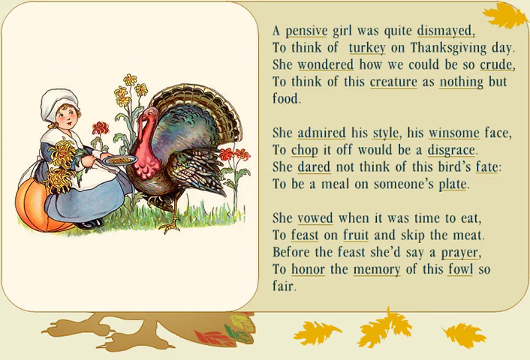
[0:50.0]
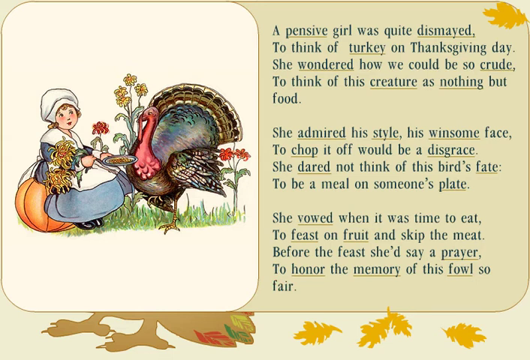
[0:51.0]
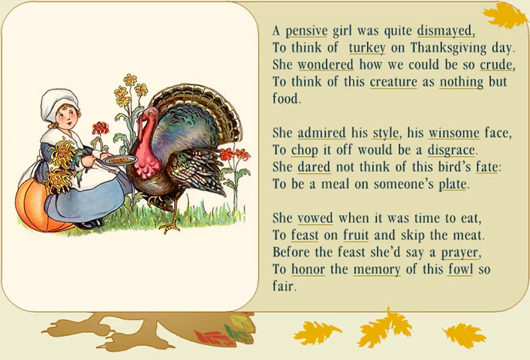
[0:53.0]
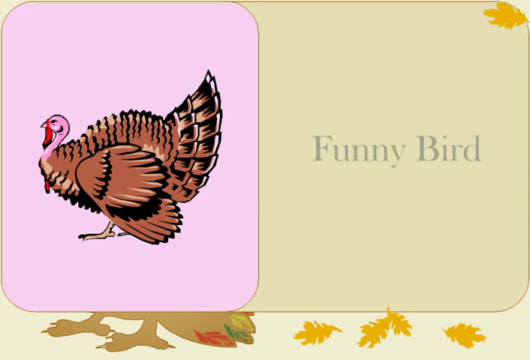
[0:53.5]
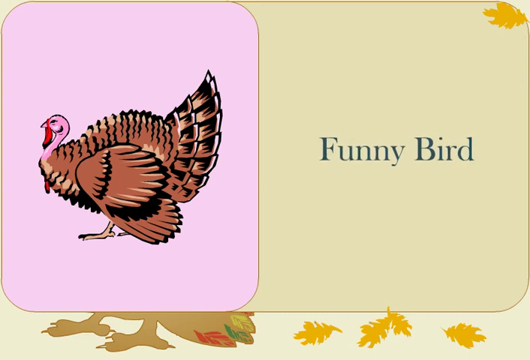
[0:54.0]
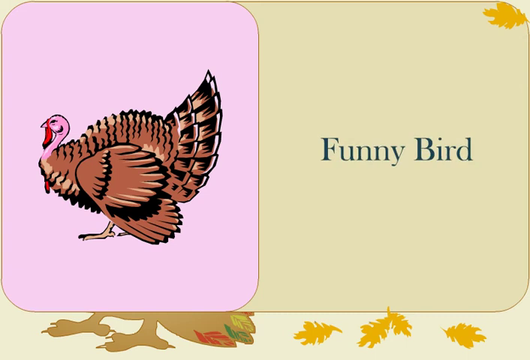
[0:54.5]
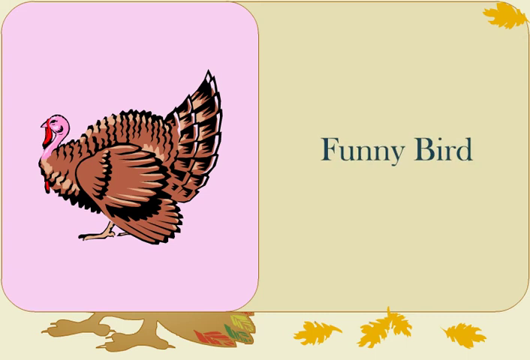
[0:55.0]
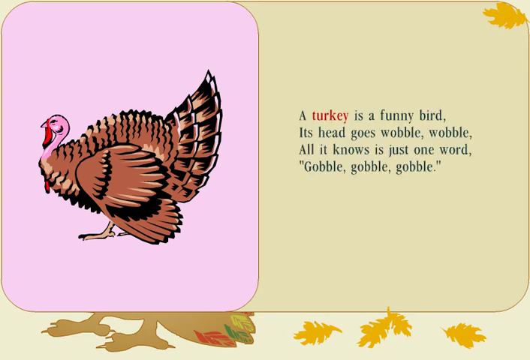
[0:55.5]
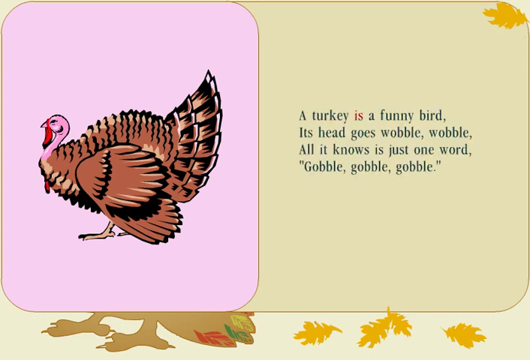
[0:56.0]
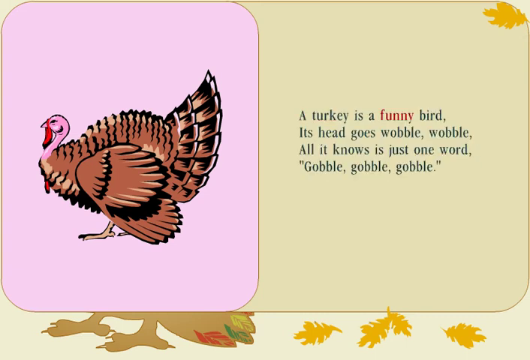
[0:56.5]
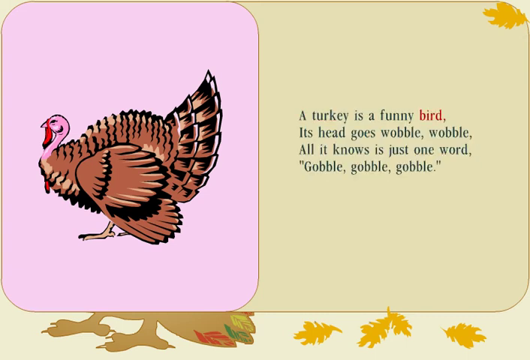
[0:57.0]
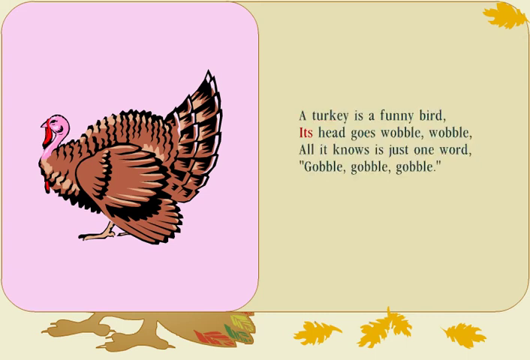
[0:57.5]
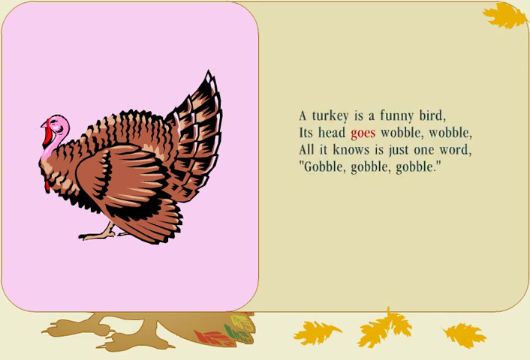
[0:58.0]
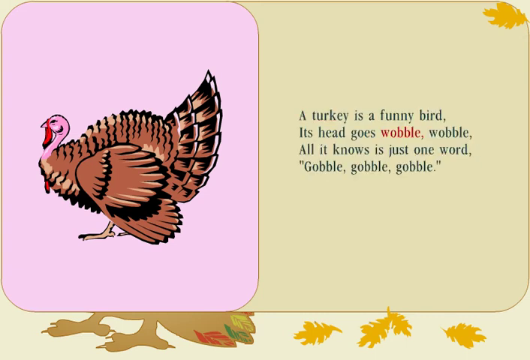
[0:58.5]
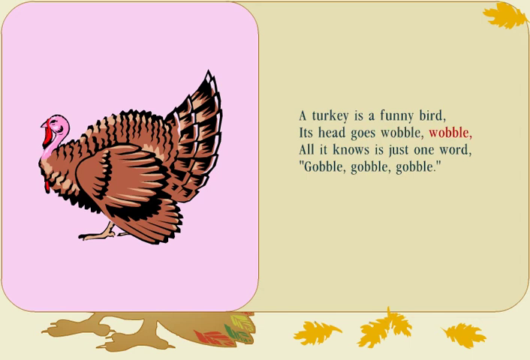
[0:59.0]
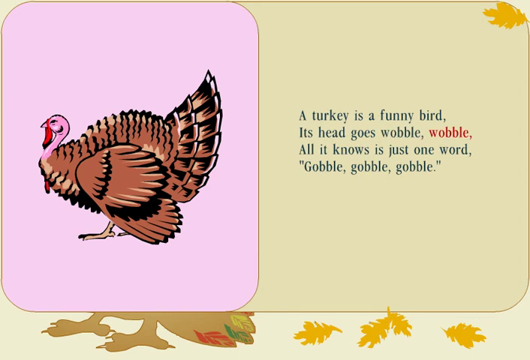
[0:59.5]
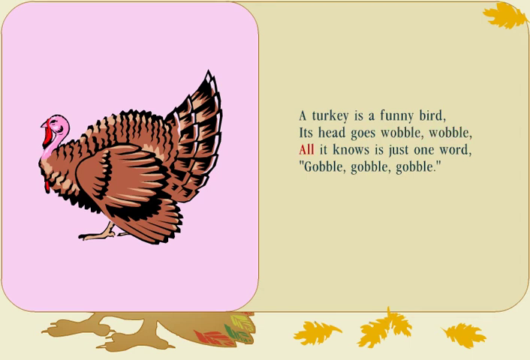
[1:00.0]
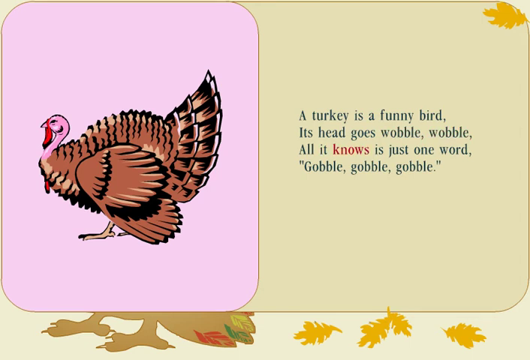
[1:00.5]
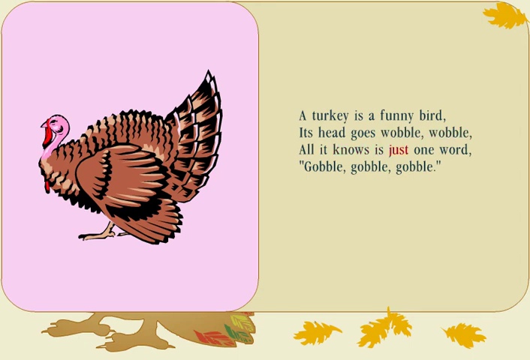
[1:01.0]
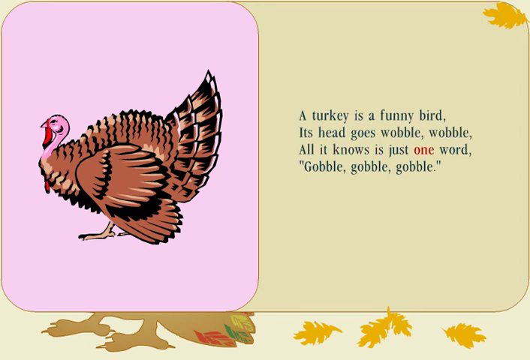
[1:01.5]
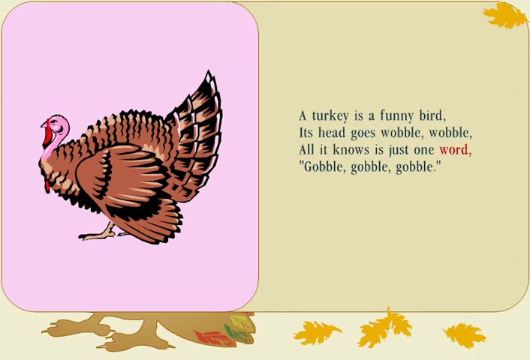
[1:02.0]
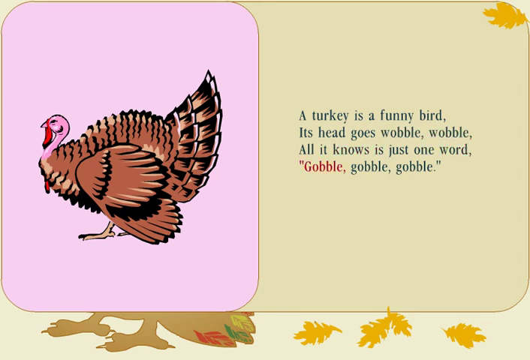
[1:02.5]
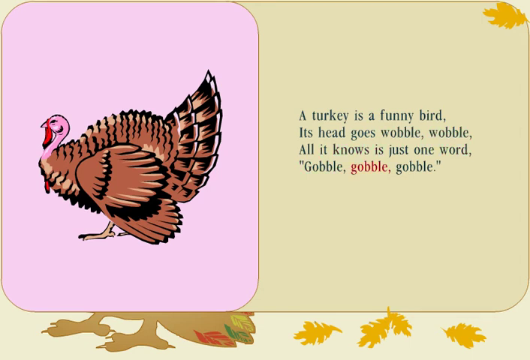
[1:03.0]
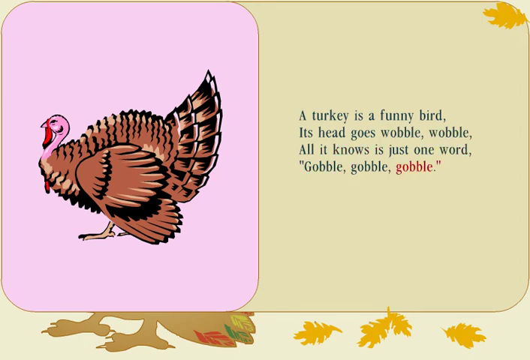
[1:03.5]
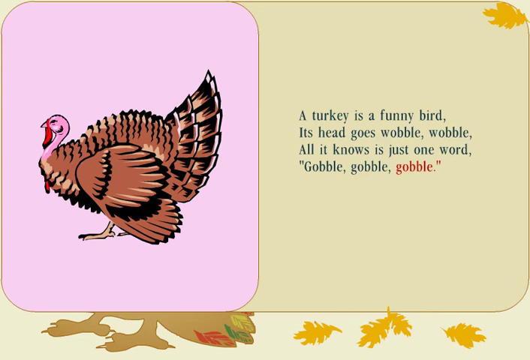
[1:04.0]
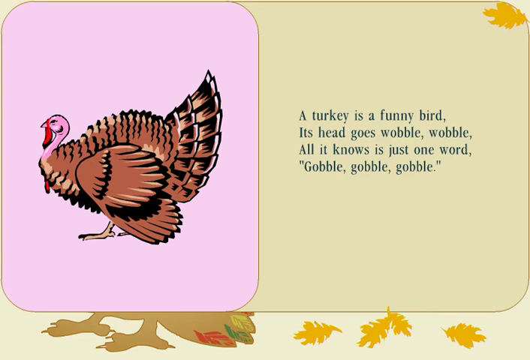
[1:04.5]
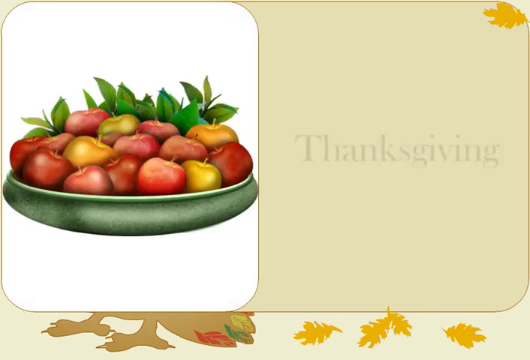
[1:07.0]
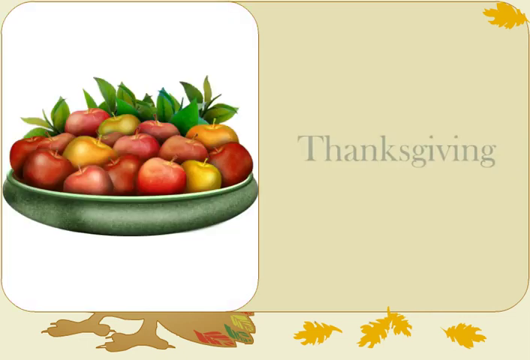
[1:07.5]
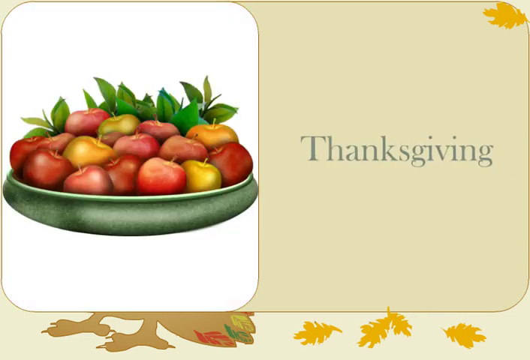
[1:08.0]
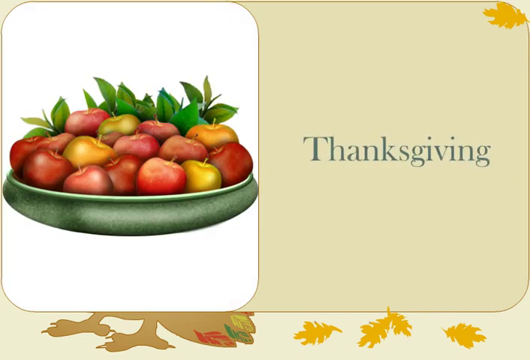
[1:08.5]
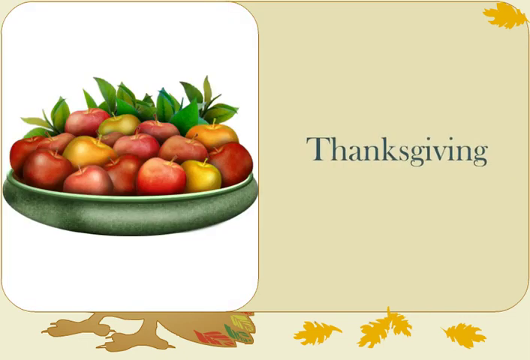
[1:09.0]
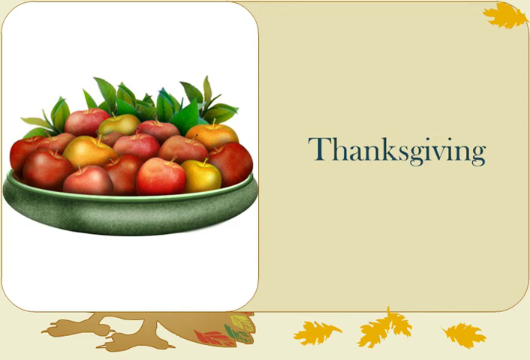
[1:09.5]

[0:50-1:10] The same poem screen continues, with the girl sitting on the pumpkin with the turkey and the poem written on the right. The video then moves to a second poem called "Funny Bird." On the left is a picture of a more plain-looking turkey, kind of a side view, with a pink background behind it. The poem appears: "A turkey is a funny bird, his head goes wobble, wobble. All it knows is just one word, gobble, gobble, gobble." It is written in the same blue writing on the same kind of tannish background, and the word "goes" is highlighted in red. A little leaf is in the top right corner of the screen, and there seem to be some leaves on the bottom as well. Toward the end, a third poem begins: on the left is kind of a plate with apples and some greenery, and on the right it just says "Thanksgiving."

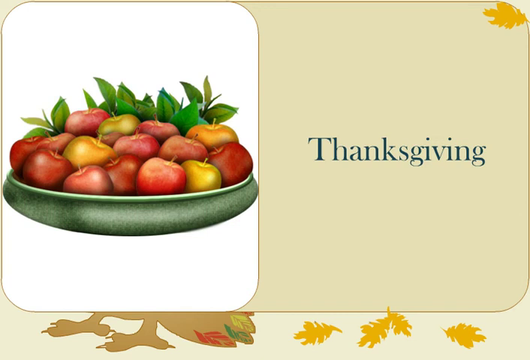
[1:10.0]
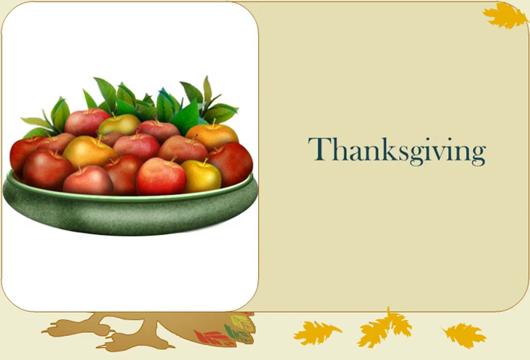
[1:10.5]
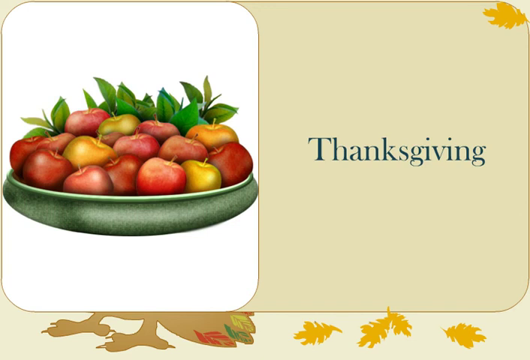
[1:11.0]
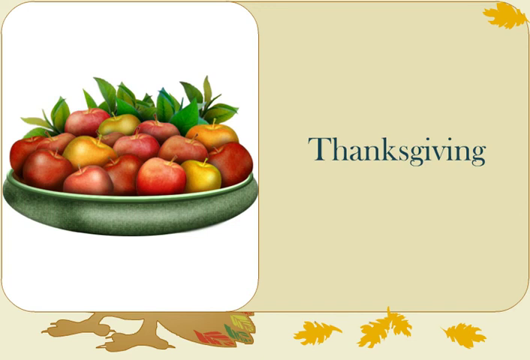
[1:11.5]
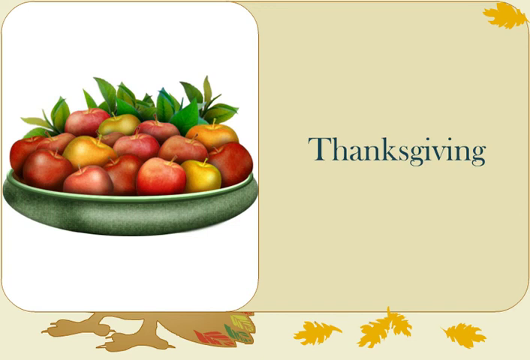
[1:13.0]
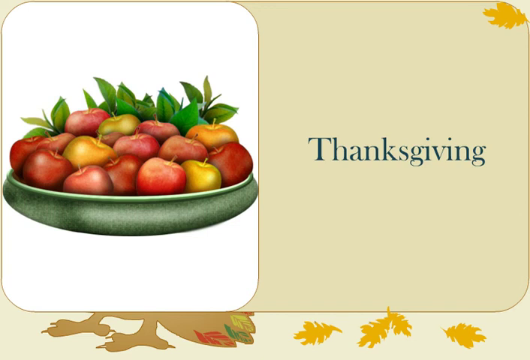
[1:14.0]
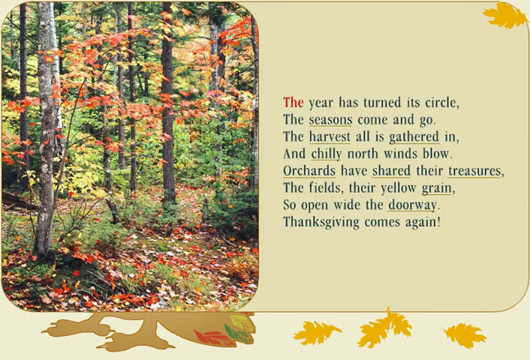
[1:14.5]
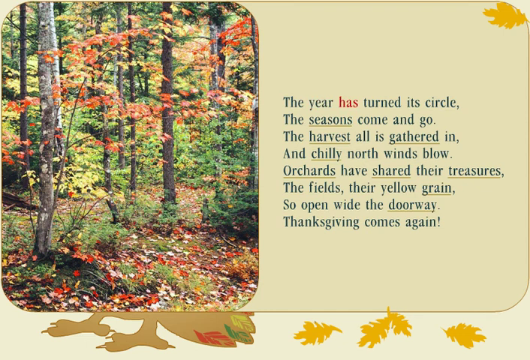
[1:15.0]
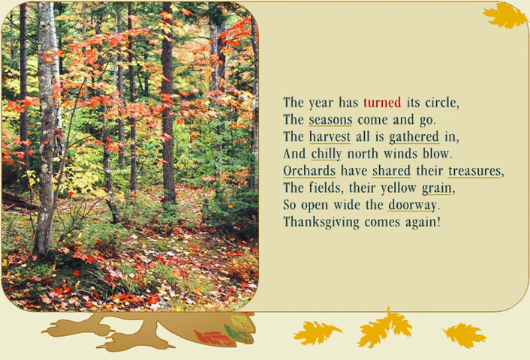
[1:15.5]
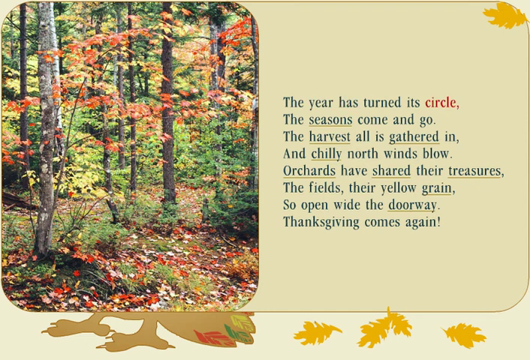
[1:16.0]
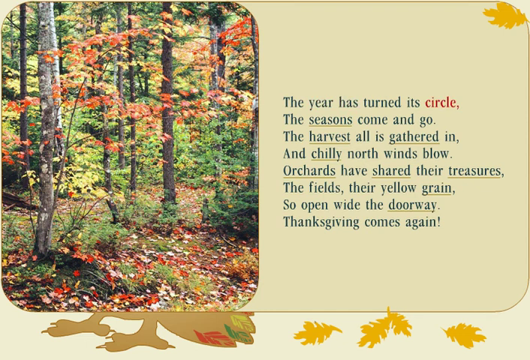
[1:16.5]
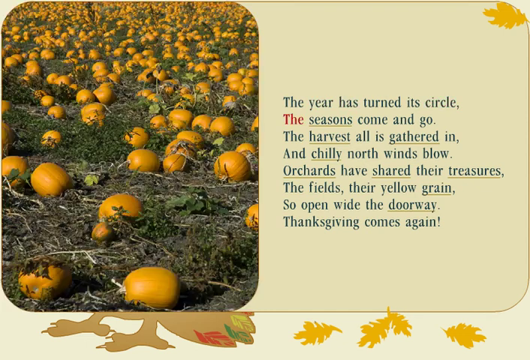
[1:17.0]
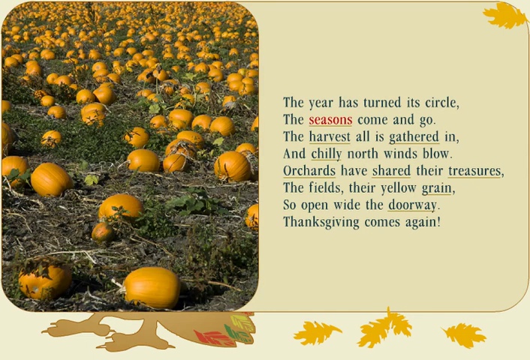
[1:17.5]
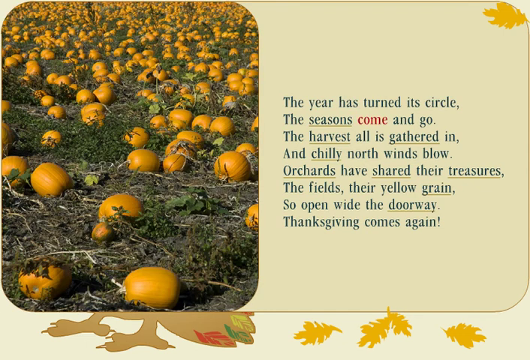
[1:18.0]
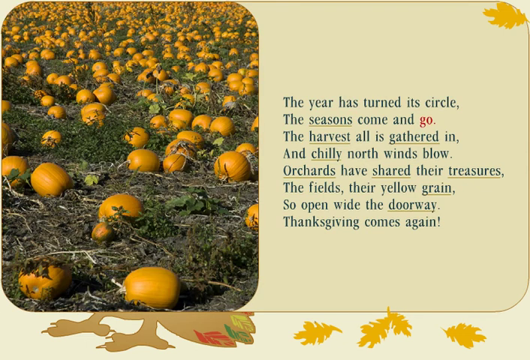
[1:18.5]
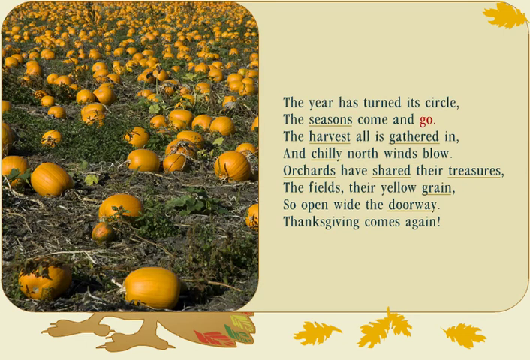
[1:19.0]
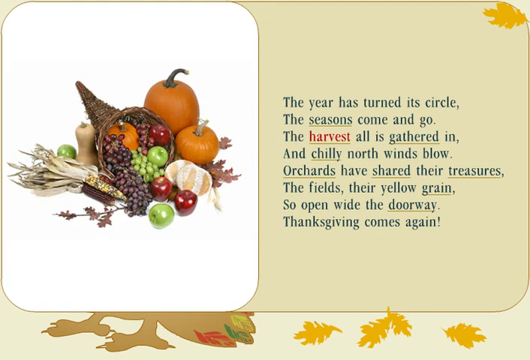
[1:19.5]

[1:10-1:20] The same screen with the plate of apples continues, with a dozen apples on the right and the word "Thanksgiving." It stays up for a bit, then cuts to another page: on the left-hand side is a real-life photo of a forest with the leaves changing, and on the right-hand side is the poem called "Thanksgiving." The poem reads: "The year has turned its circle, the seasons come and go, the harvest all is gathered in, chilly north winds blow. Orchards have shared their treasures, the fields their yellow grains," and it ends with "Thanksgiving comes again."